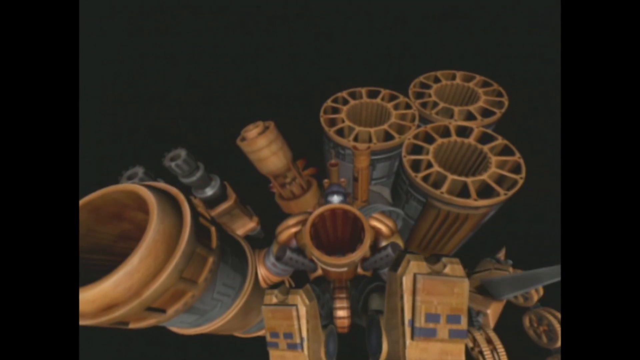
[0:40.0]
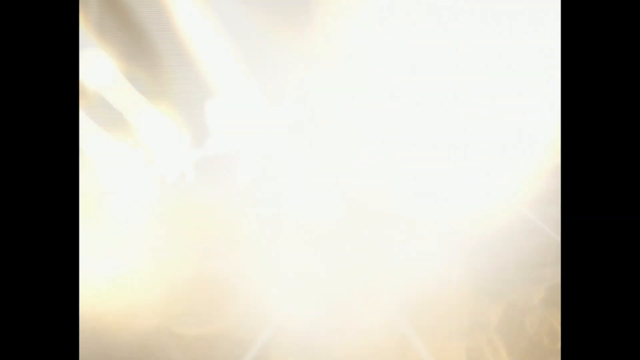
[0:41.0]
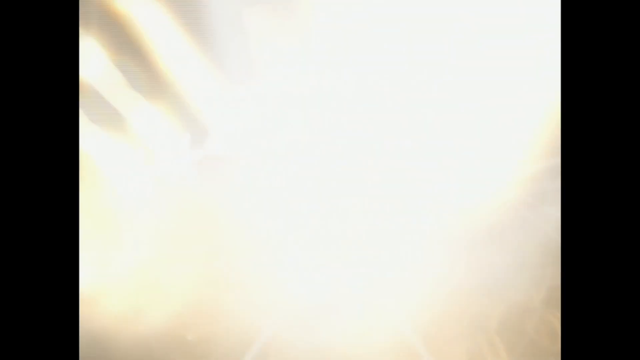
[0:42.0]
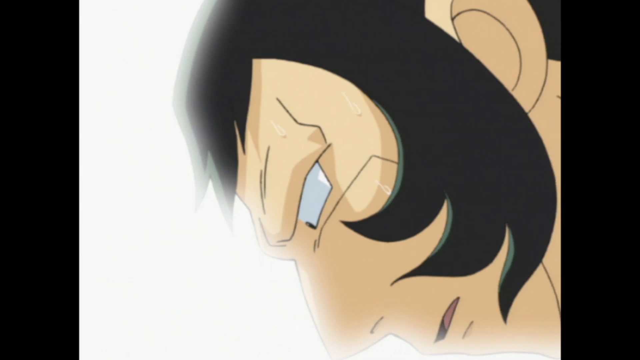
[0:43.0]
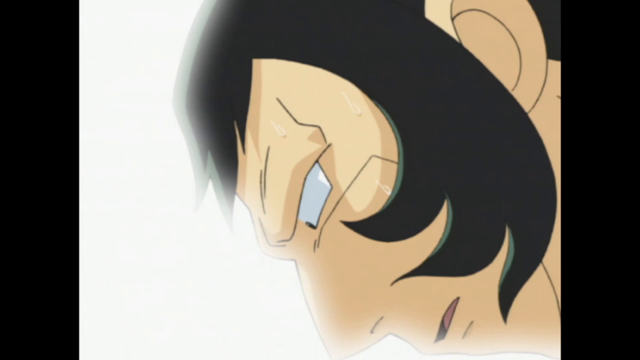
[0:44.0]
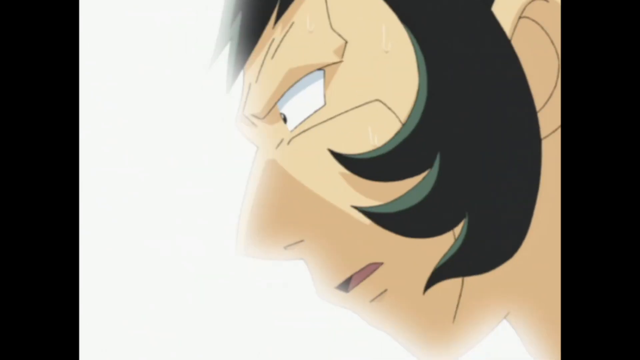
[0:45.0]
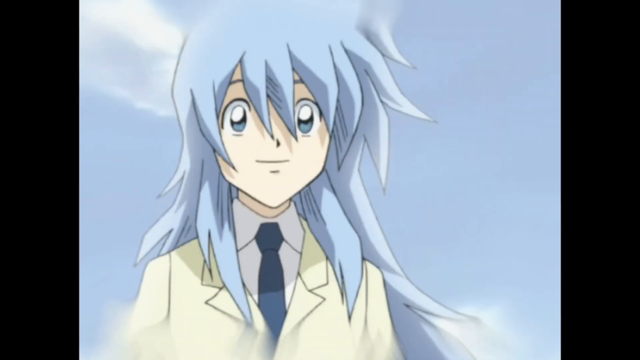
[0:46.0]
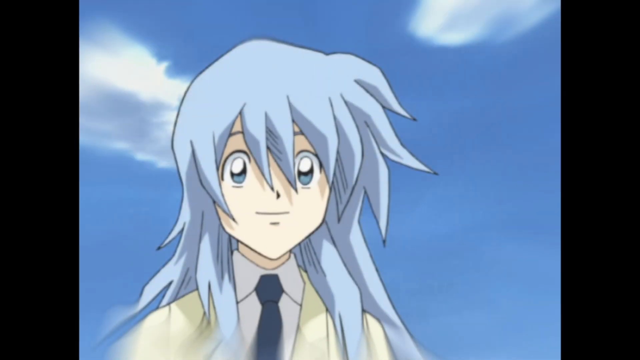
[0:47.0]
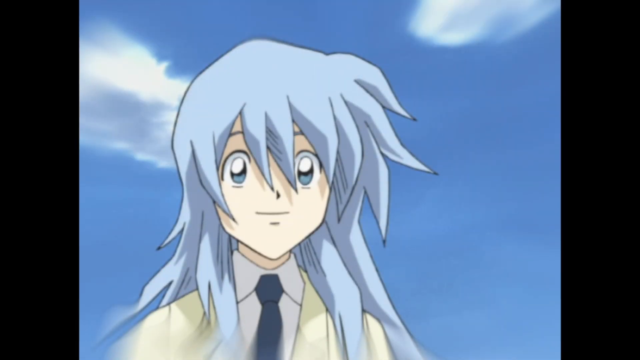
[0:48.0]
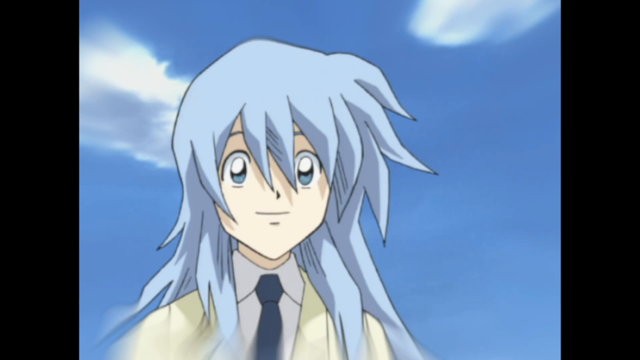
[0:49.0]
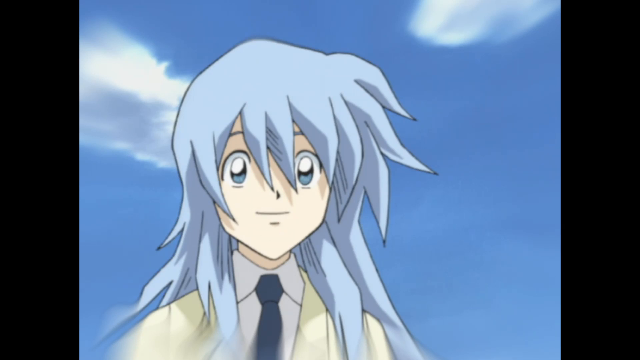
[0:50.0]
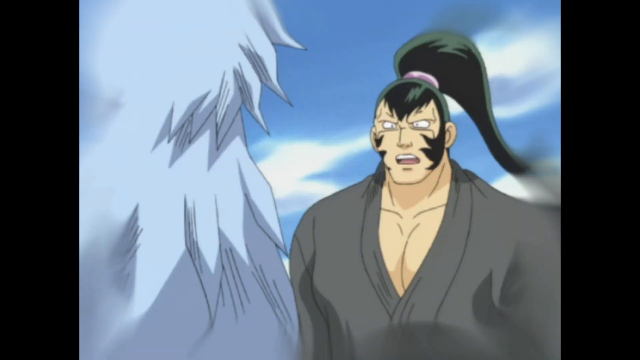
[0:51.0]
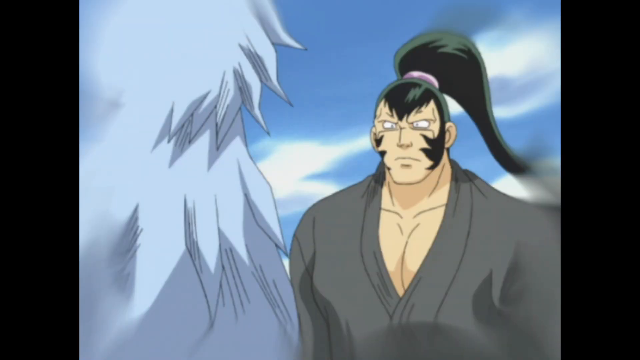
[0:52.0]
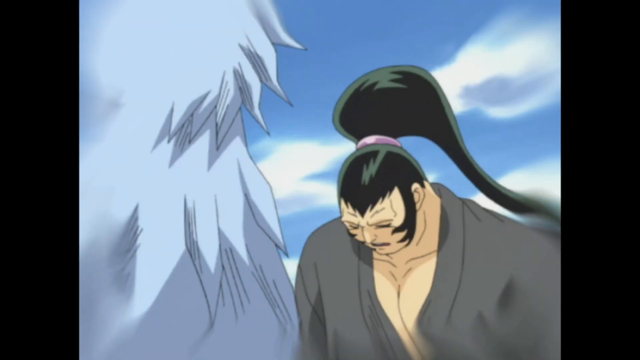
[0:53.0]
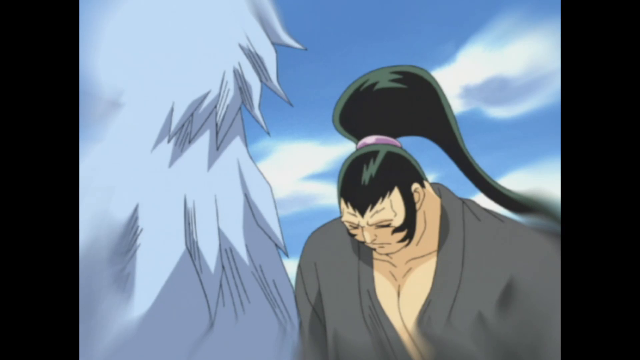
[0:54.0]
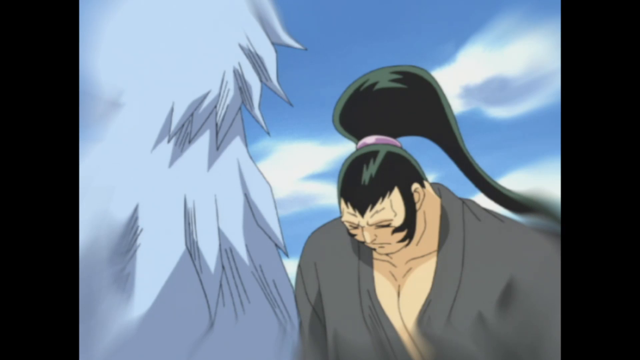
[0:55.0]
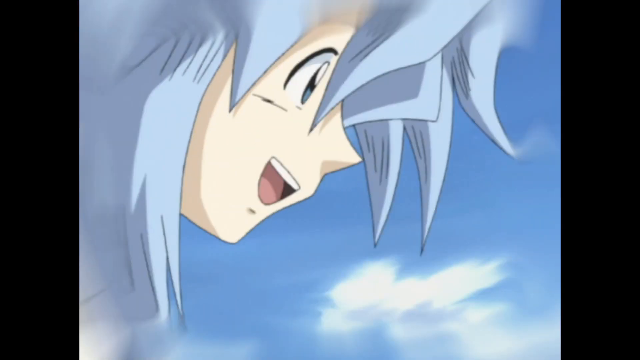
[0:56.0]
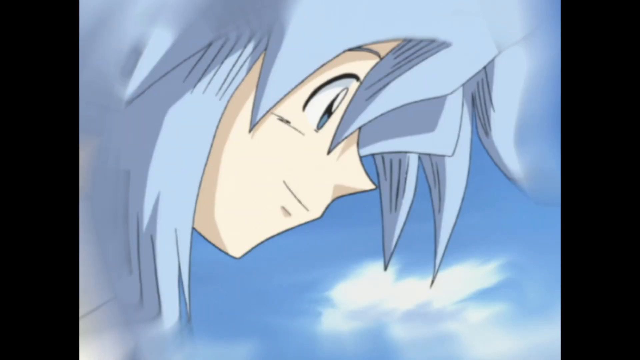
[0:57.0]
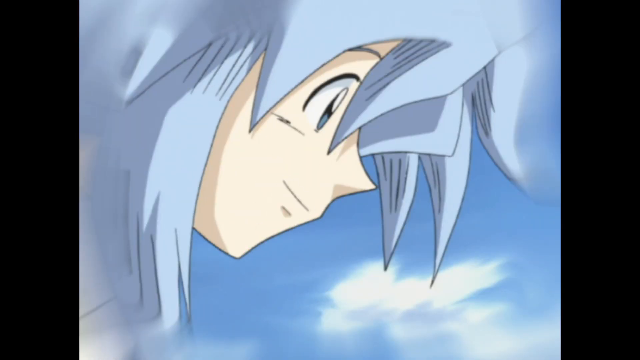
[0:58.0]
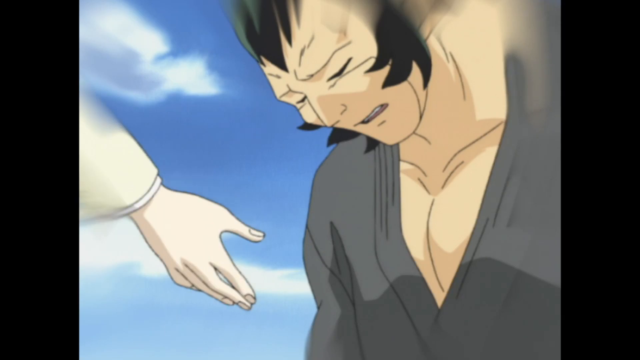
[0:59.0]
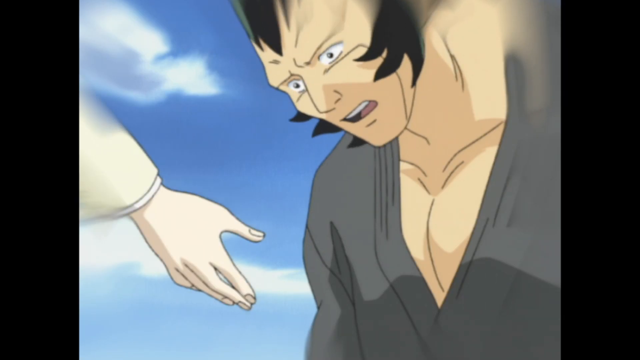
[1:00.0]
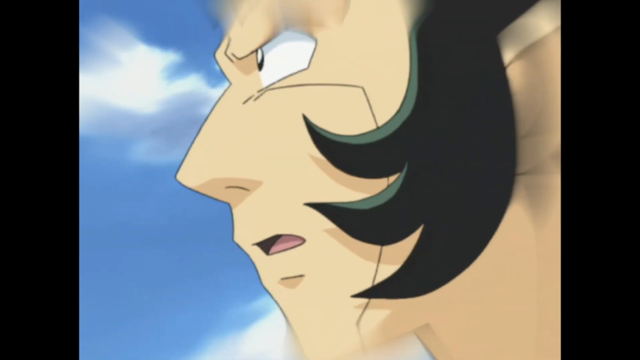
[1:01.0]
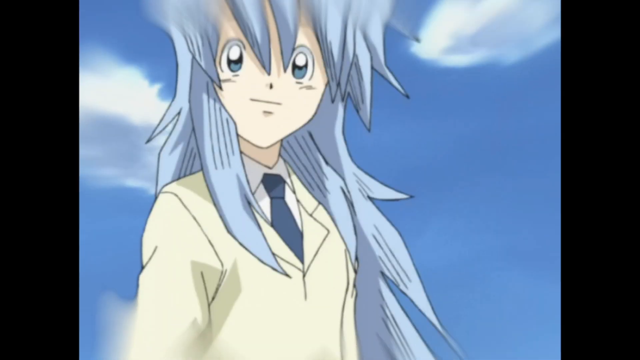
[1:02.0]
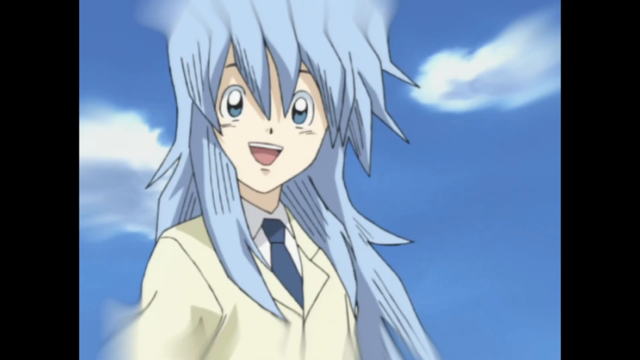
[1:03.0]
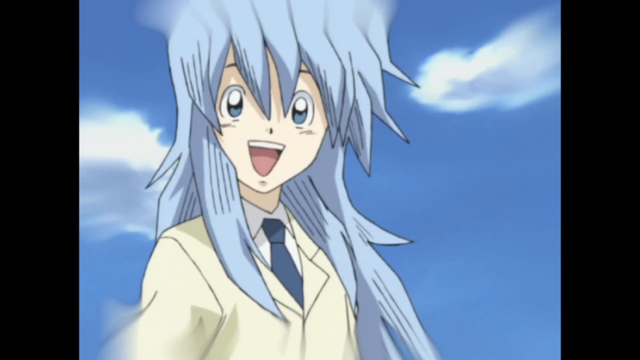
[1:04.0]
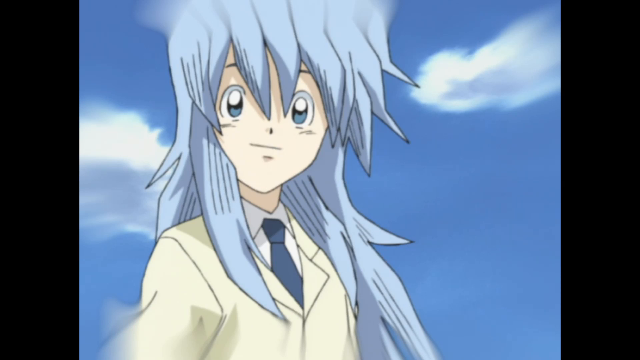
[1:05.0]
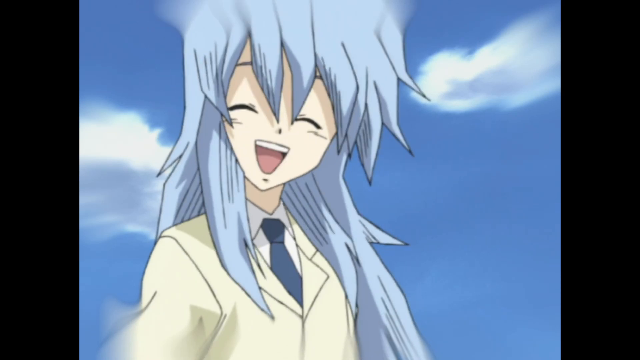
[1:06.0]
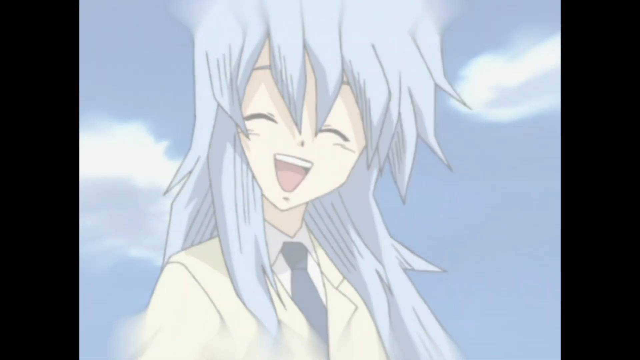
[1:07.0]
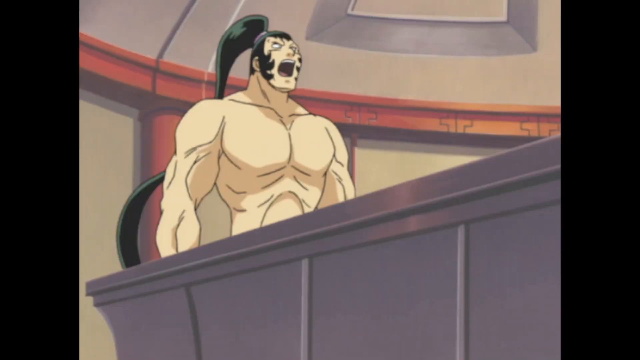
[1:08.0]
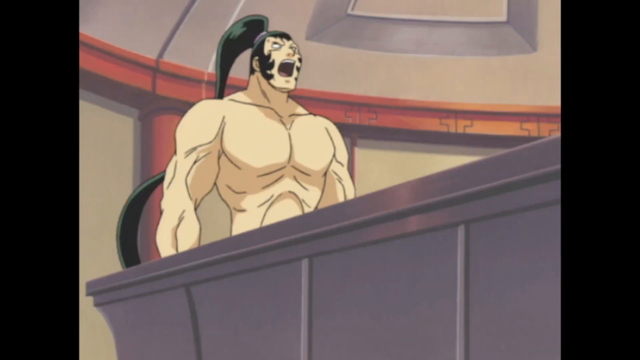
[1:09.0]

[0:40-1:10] The knight faces the opponent. It is so bright that the shirtless guy shields himself from the brightness. A girl appears wearing a tie, a white shirt and a yellow coat. The sky is blue and clear with small white clouds. The girl talks to the guy, who now wears a robe, has a ponytail and a big face. He bows to the girl as a sign of respect, and she bows back. They talk, the girl gives the guy her hand, and she laughs. The scene returns to the house where they are playing cards. The guy is shirtless and cries in agony, as if saying he is defeated. The light in the house is dim.